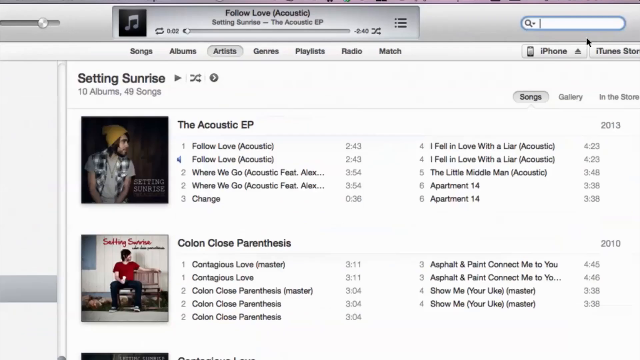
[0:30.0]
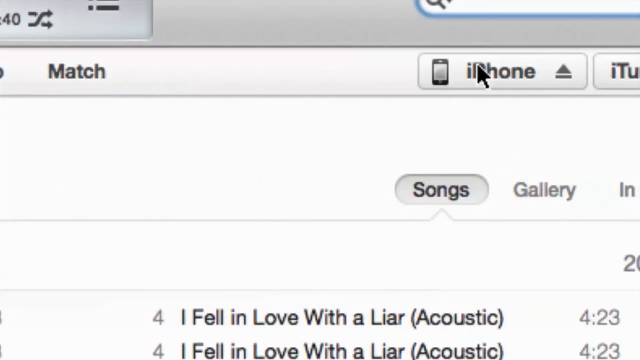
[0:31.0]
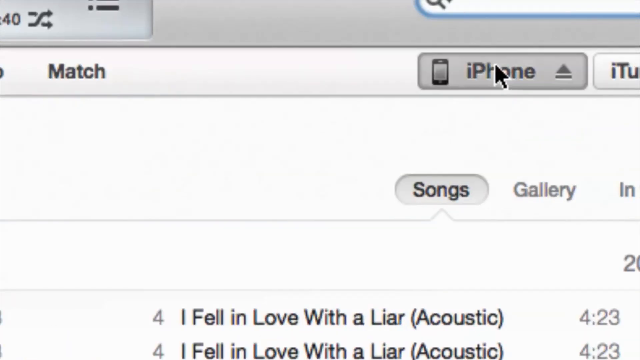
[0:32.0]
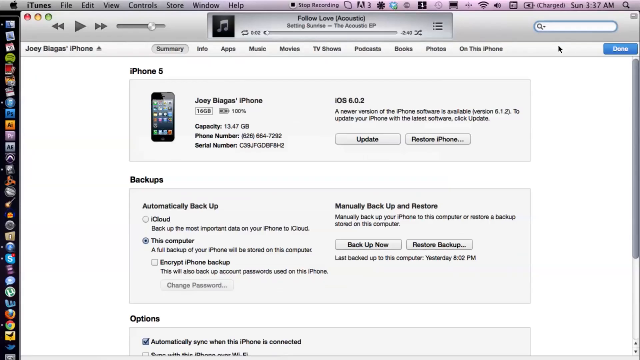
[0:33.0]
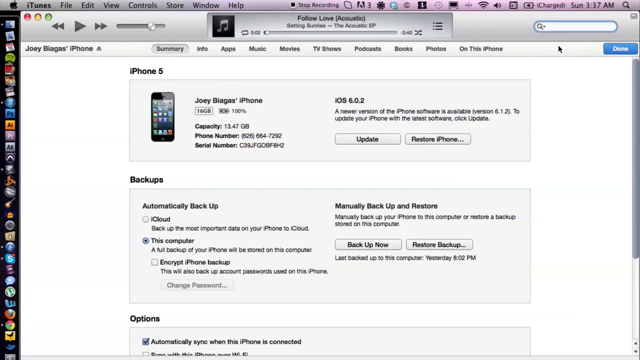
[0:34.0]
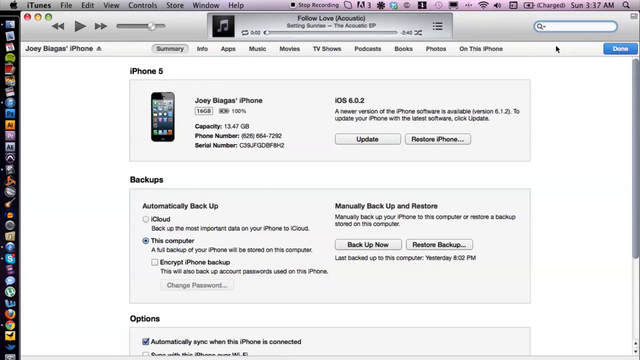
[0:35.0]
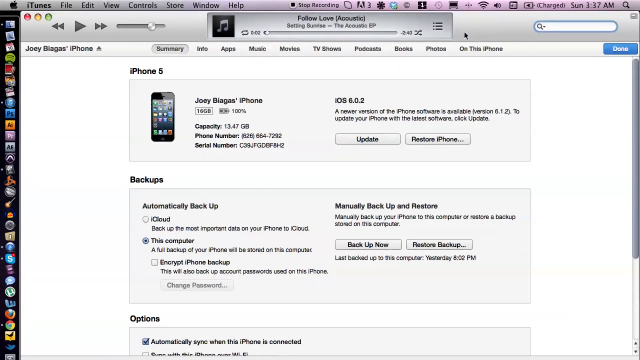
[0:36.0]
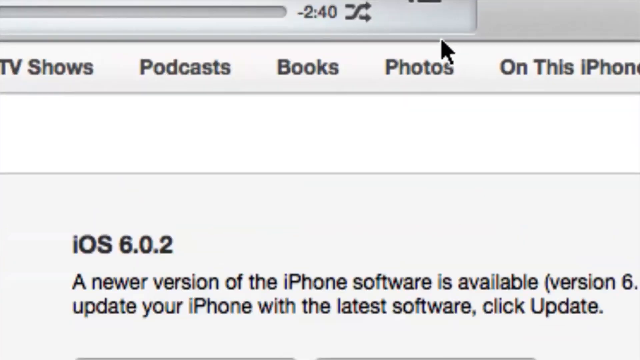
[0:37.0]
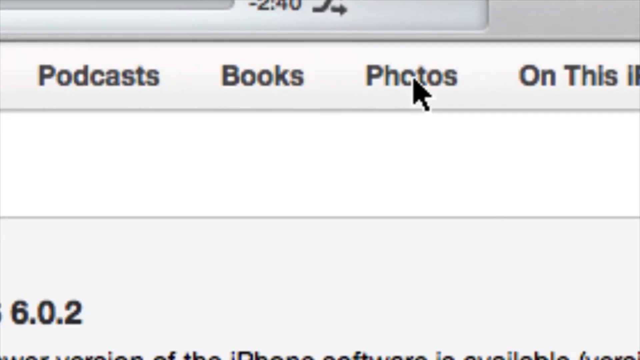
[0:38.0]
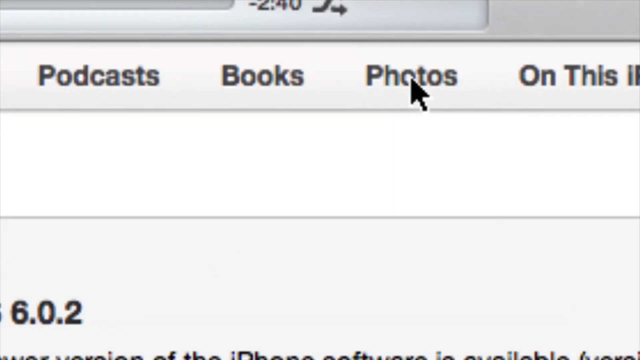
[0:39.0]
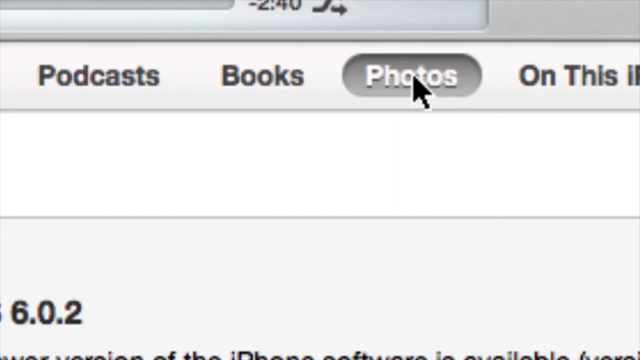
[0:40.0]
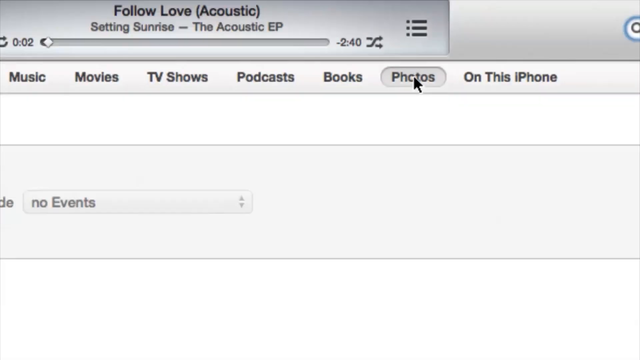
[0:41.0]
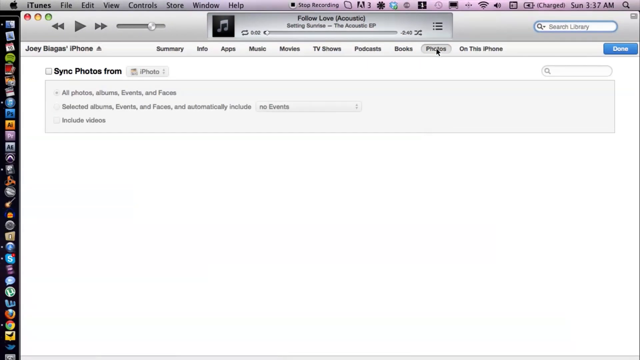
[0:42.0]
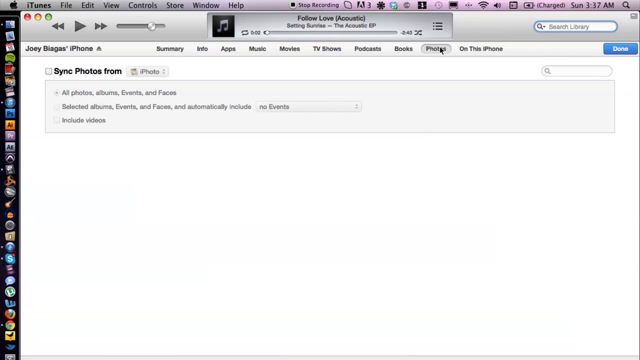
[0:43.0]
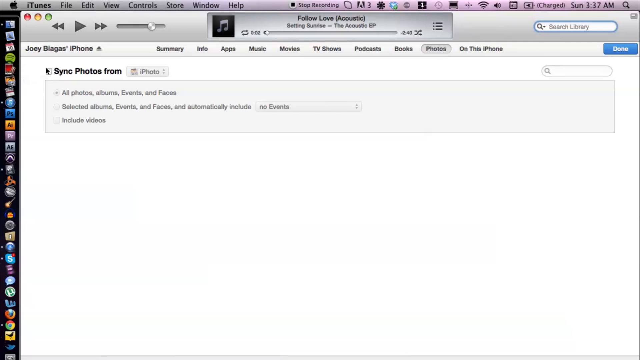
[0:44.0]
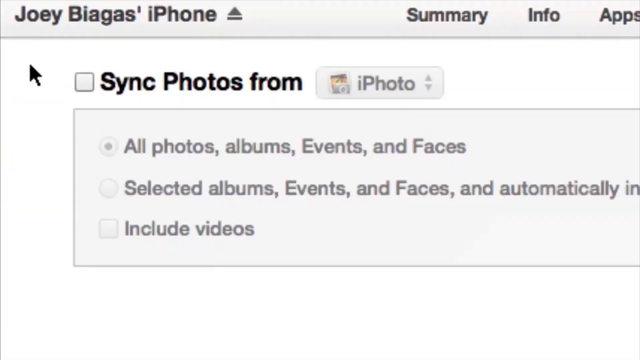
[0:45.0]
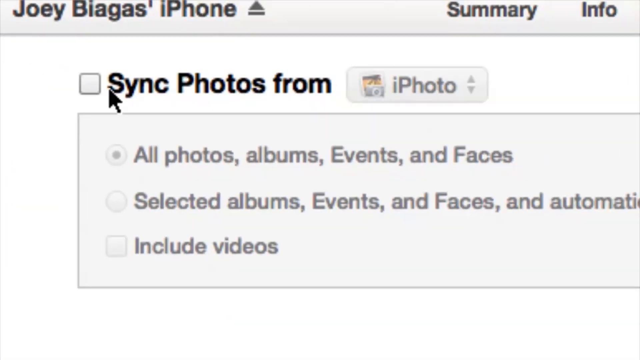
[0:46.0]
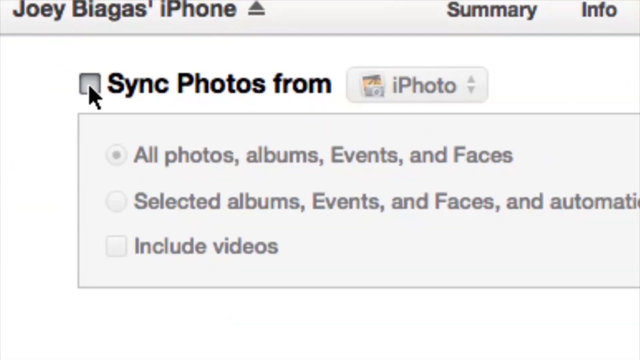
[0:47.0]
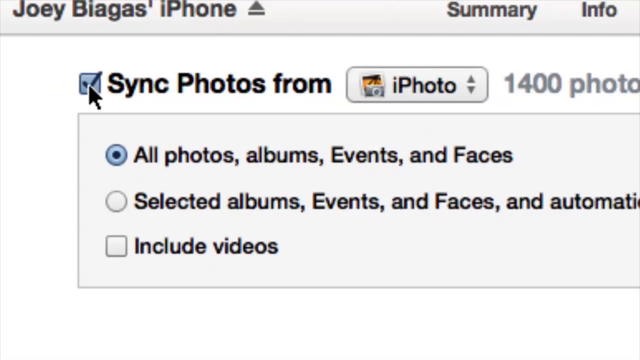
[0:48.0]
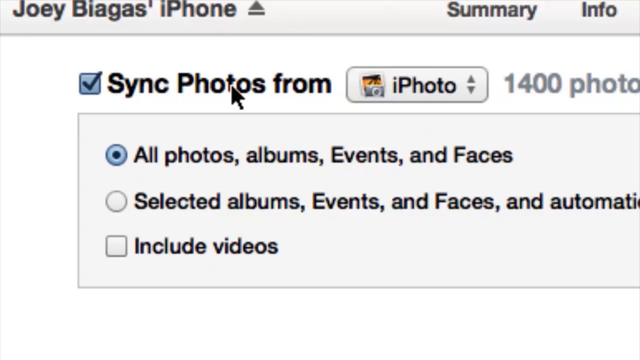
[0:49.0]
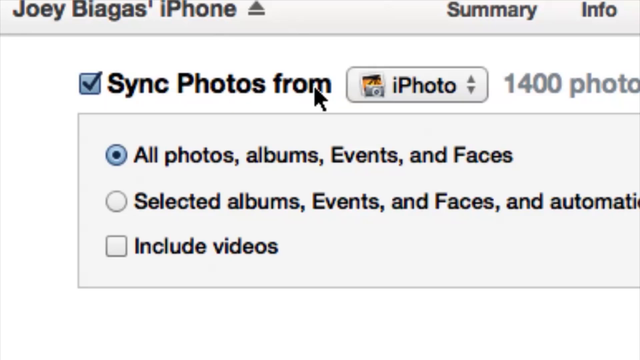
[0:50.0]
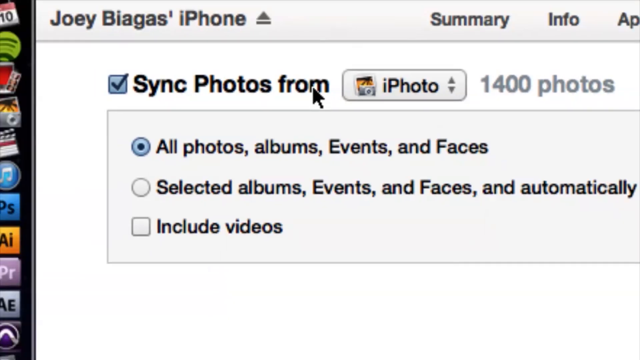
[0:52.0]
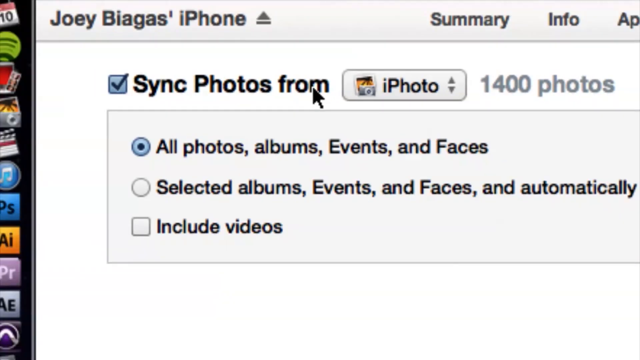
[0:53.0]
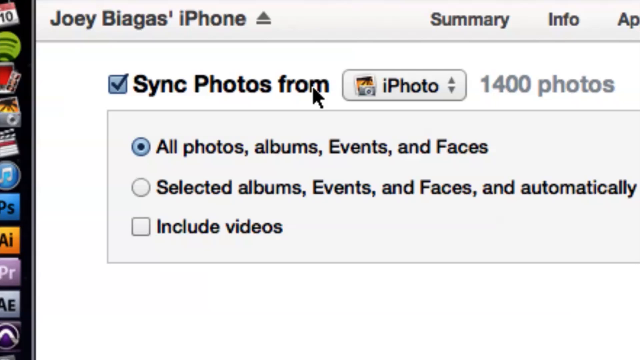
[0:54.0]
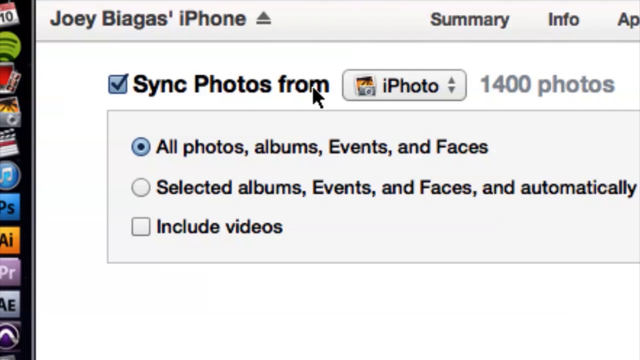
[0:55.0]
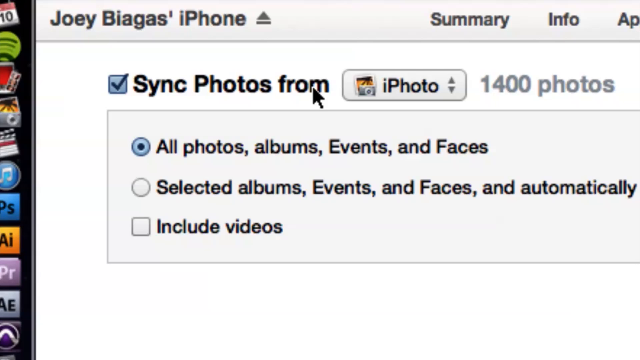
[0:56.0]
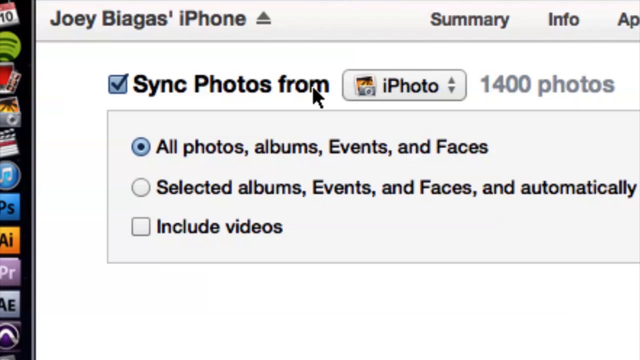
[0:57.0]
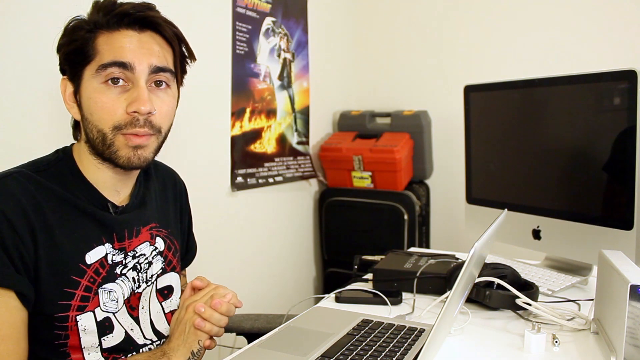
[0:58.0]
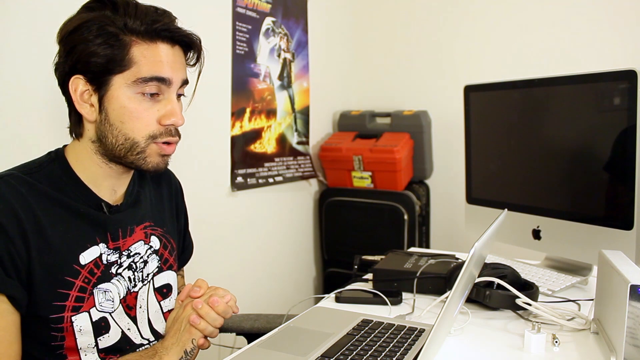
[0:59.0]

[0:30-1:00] On the computer, he clicks on Photos. The iPhone is clicked at the top right, then Photos at the top of the screen, then "sync photos from". Several options appear: iPhoto shows the amount of photos on the phone, and there are options such as all photos, videos, and others, which the YouTuber apparently is about to run through. The homepage shows albums of various artists, including an album called Certain Tone Rhymes with 10 songs in it, a count of 10 albums and 49 songs, and The Acoustic EP. The steps shown go to the iPhone, click on sync, and select the iPhone.